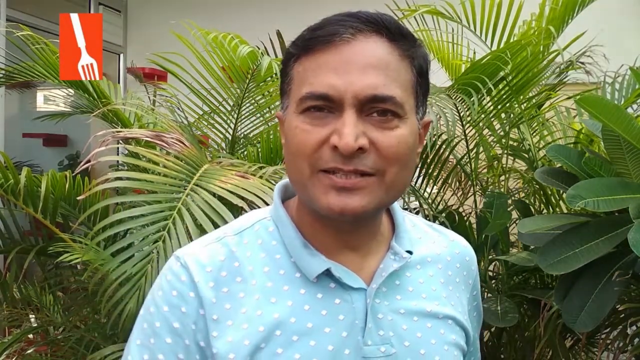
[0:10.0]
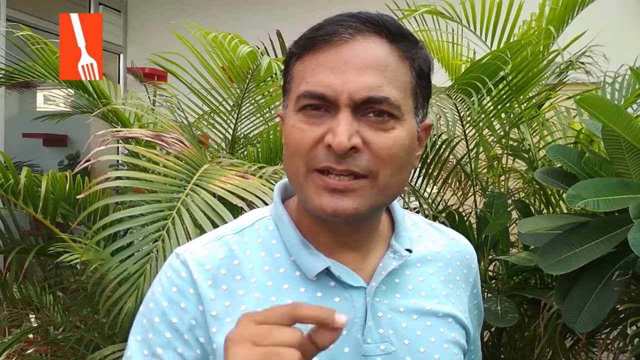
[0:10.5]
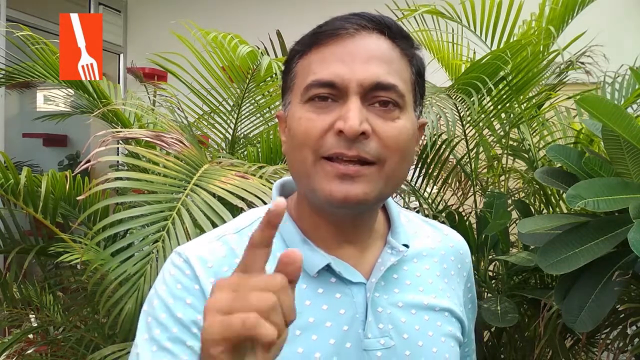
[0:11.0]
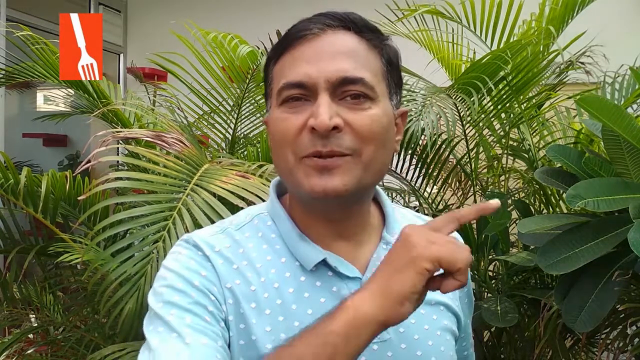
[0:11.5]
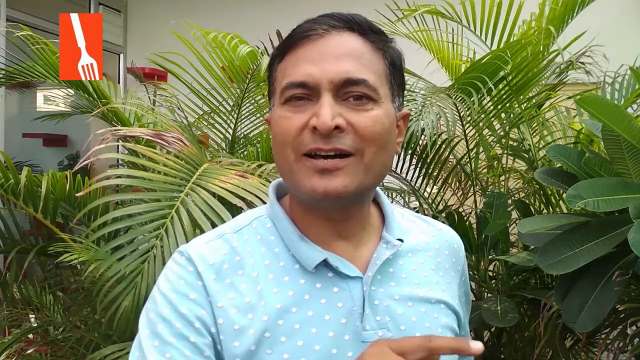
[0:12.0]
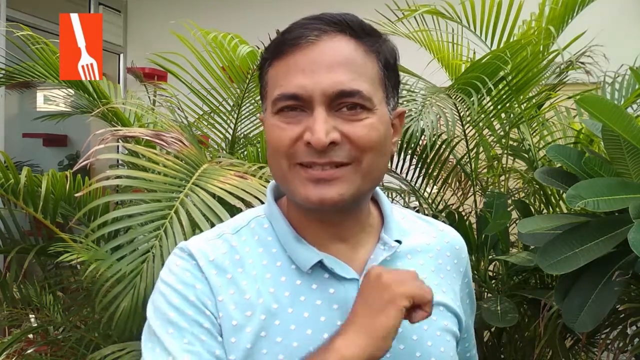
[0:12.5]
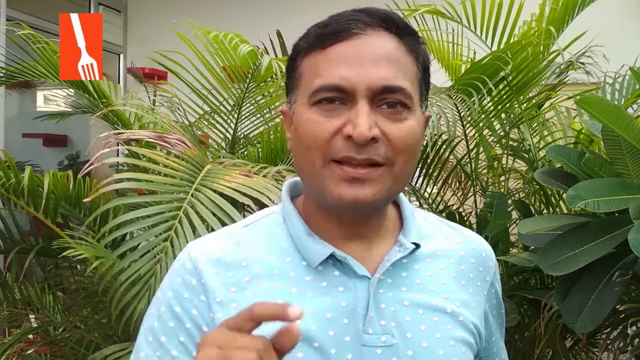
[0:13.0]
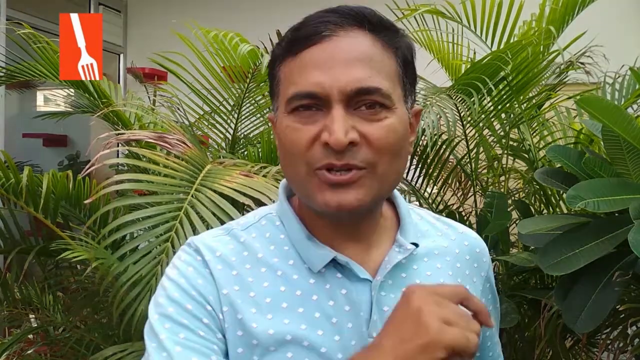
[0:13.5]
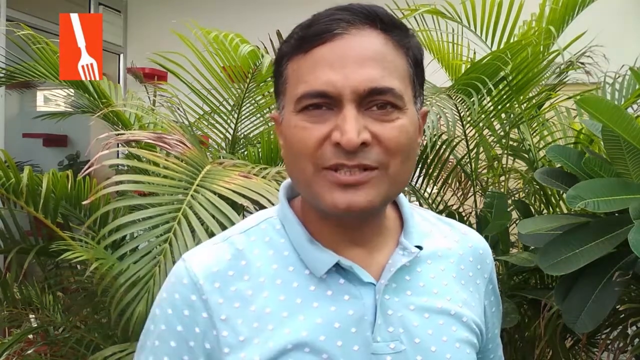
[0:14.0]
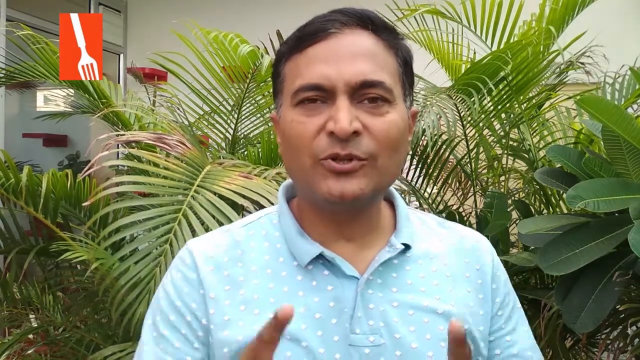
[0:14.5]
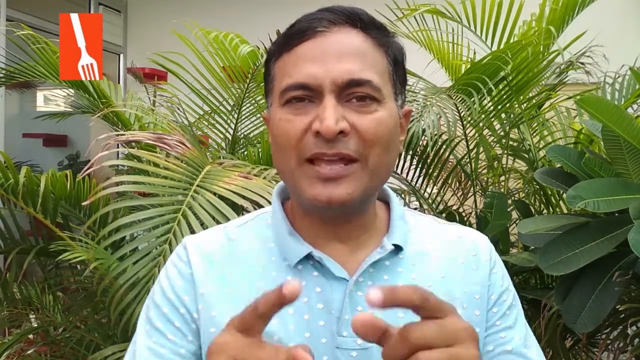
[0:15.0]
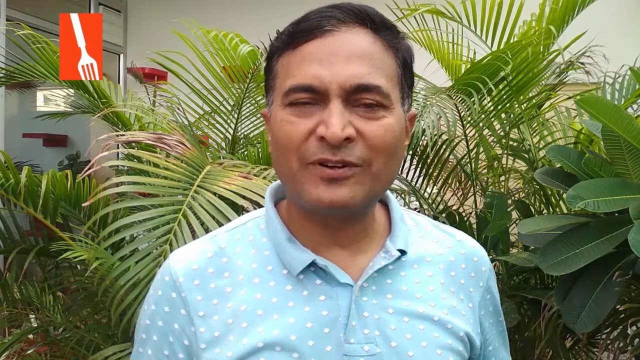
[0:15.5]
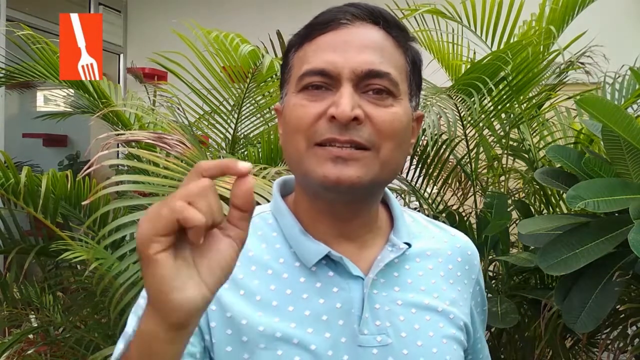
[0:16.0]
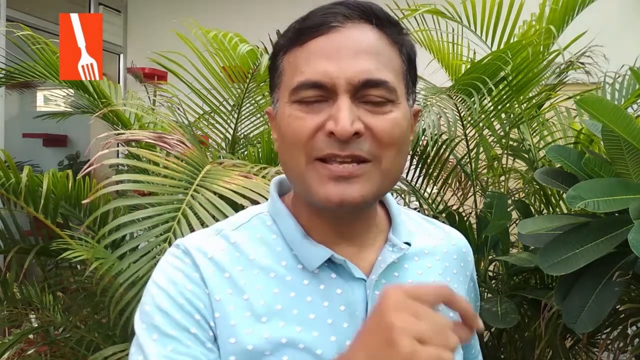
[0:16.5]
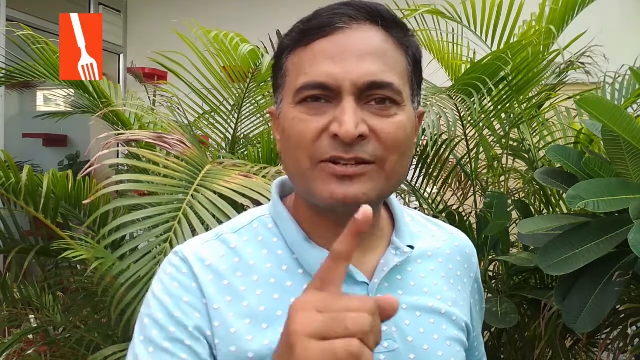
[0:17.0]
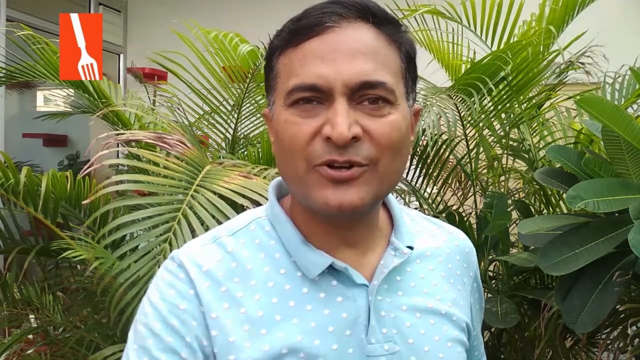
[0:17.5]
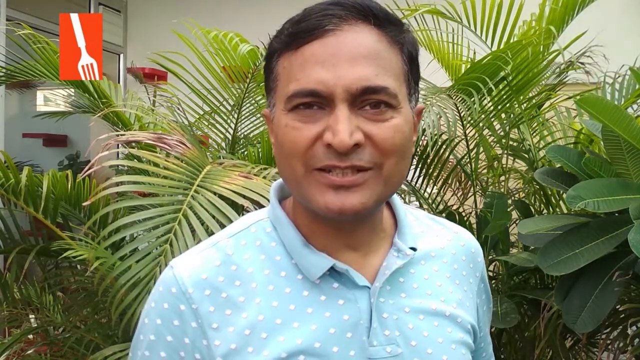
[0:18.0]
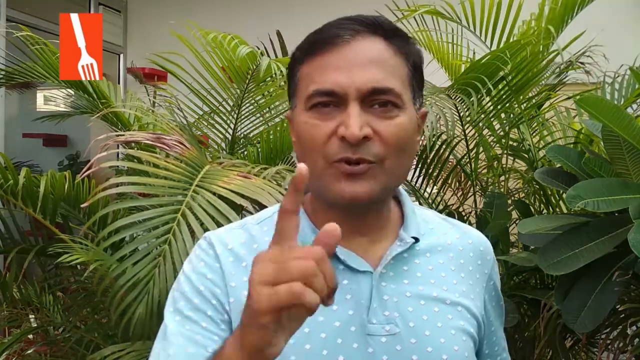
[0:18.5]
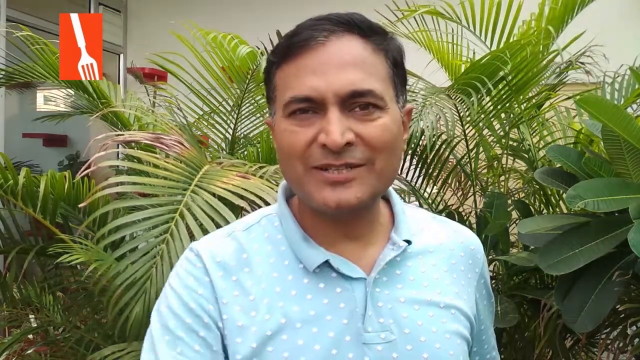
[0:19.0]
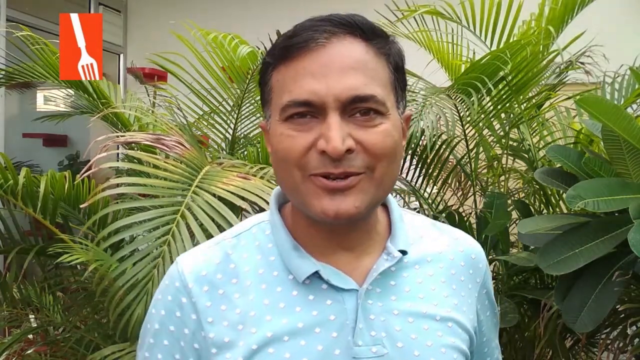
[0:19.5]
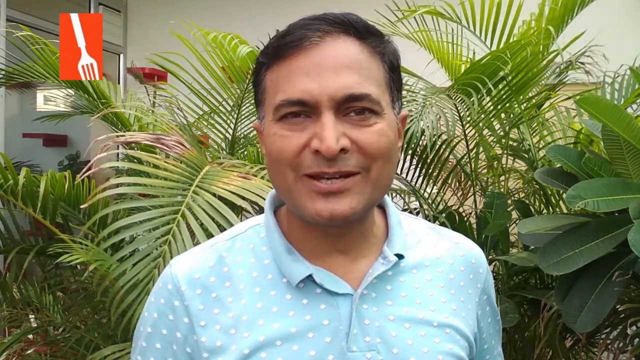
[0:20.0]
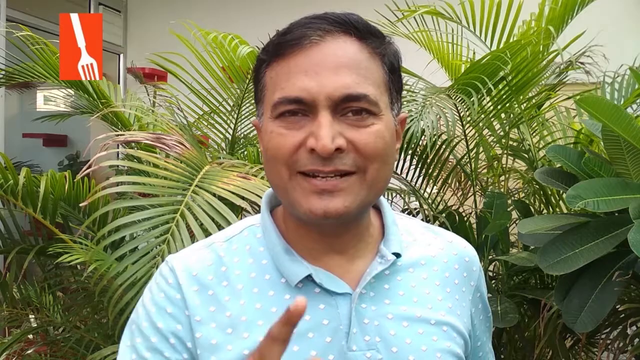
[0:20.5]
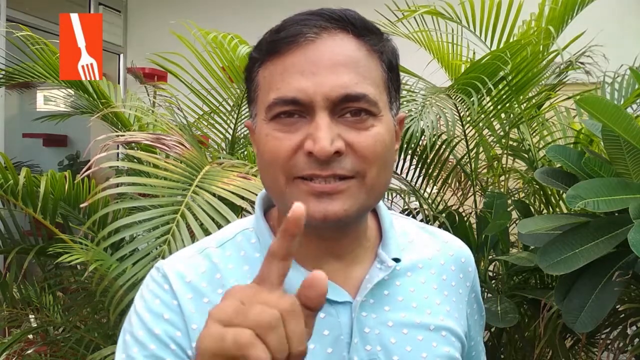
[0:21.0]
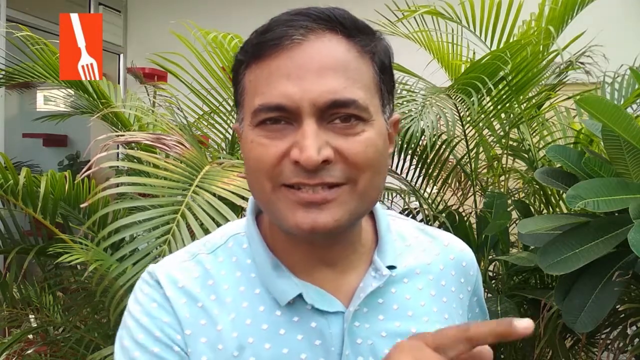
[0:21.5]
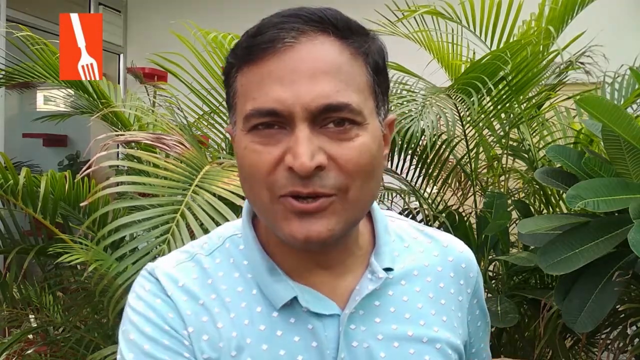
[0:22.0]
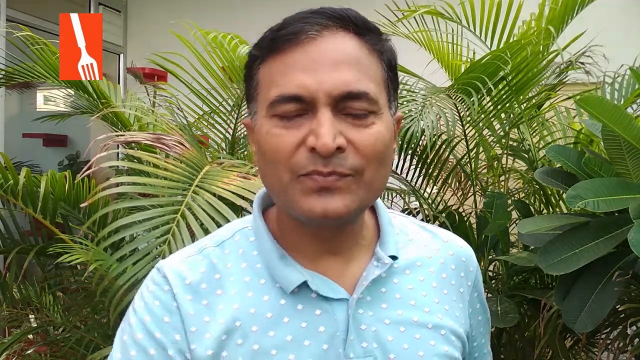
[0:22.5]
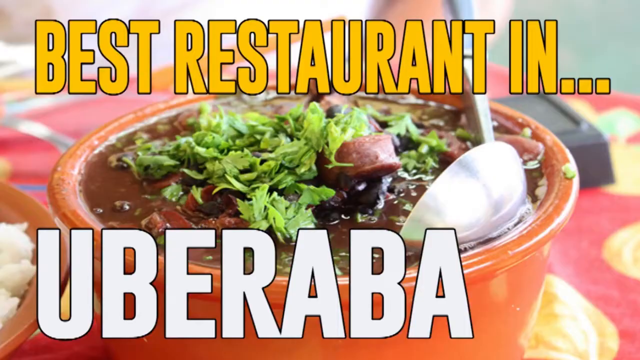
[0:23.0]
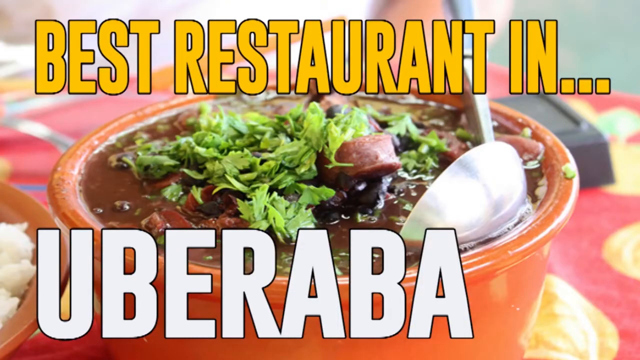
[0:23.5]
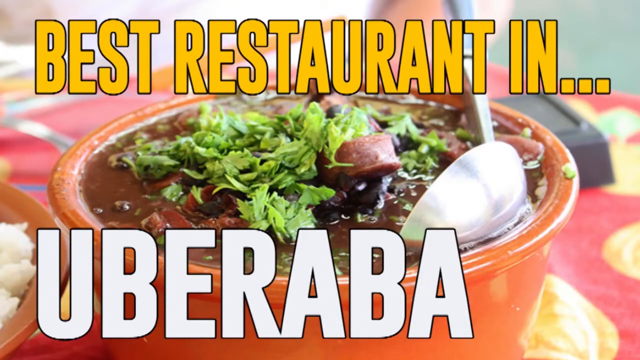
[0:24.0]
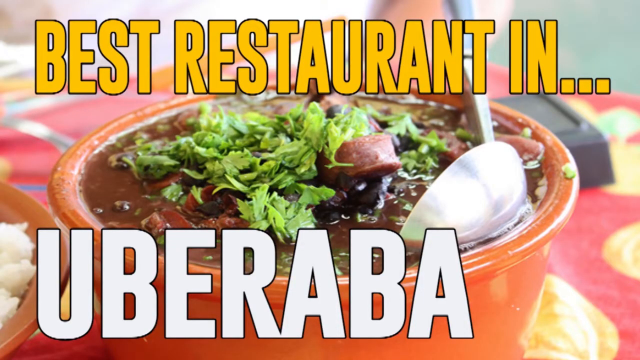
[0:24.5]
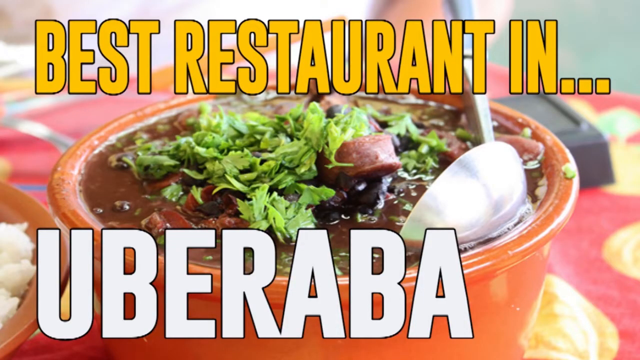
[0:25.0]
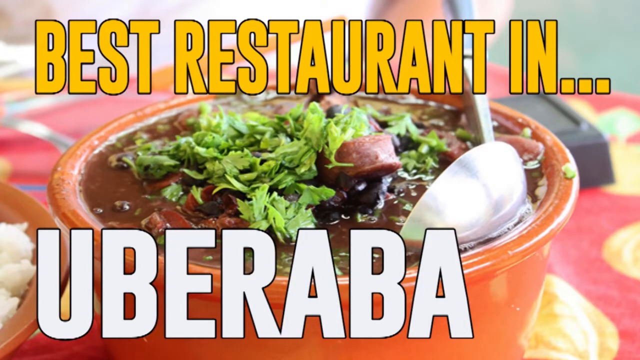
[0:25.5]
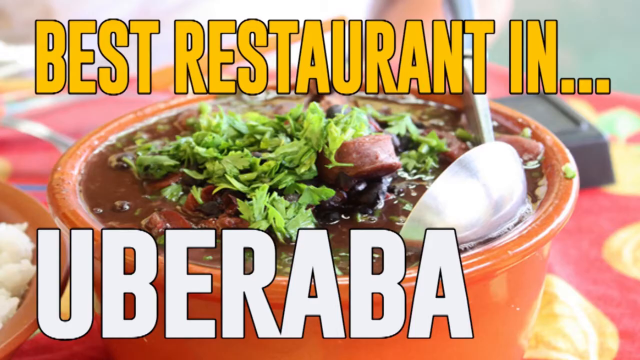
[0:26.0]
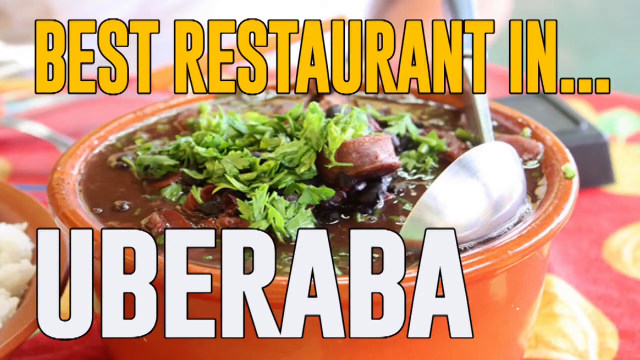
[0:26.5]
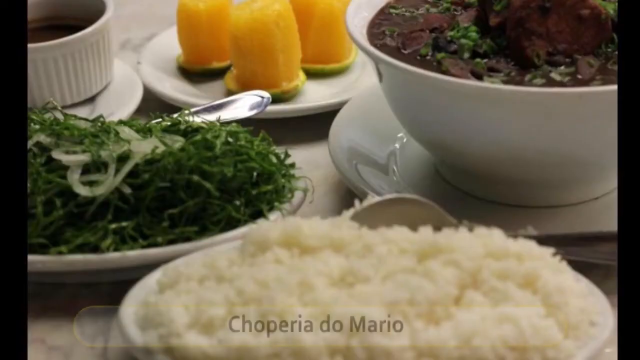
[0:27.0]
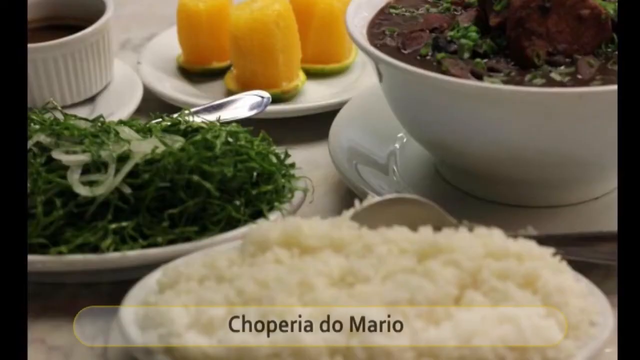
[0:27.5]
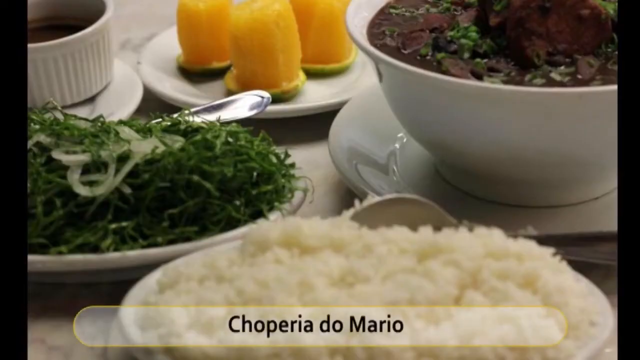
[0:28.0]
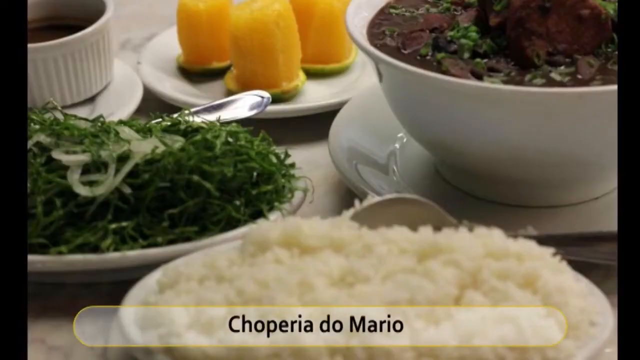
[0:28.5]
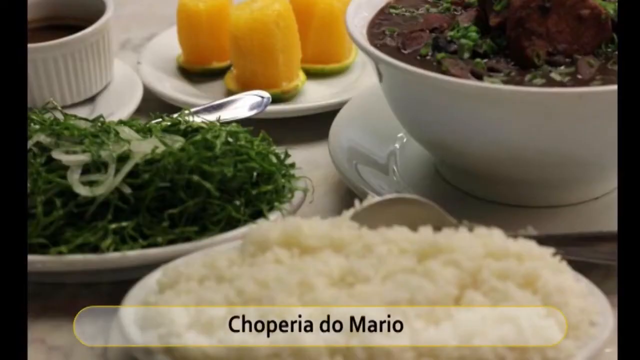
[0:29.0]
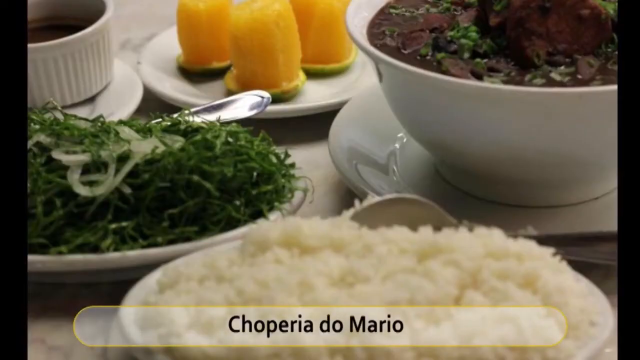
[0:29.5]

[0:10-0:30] A man looks at the camera, speaking, his body slightly turned to his left, the right side of the frame. As he speaks he lifts his right hand in front of him with the index finger extended and gestures slightly to his left. He drops his hand, lifts it again and makes the same gesture in front of him with his right index finger extended. He makes the same gesture with his right hand once more, then lifts both hands in front of him and gestures with both index fingers extended. He looks directly at the camera and smirks while he speaks.